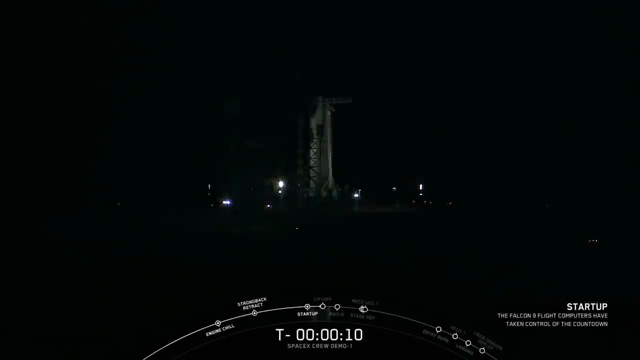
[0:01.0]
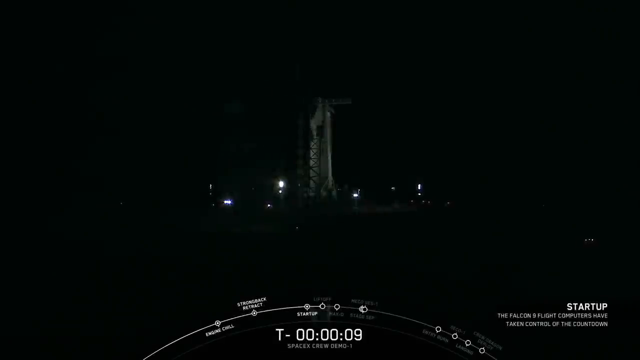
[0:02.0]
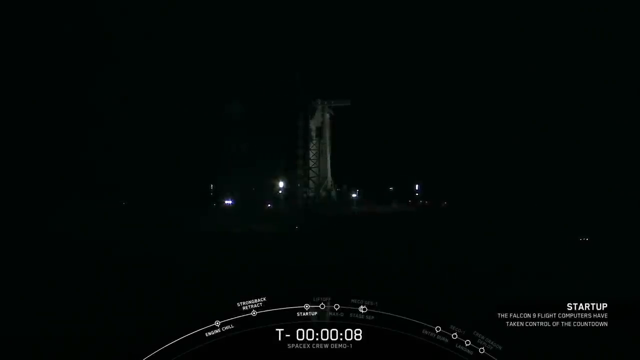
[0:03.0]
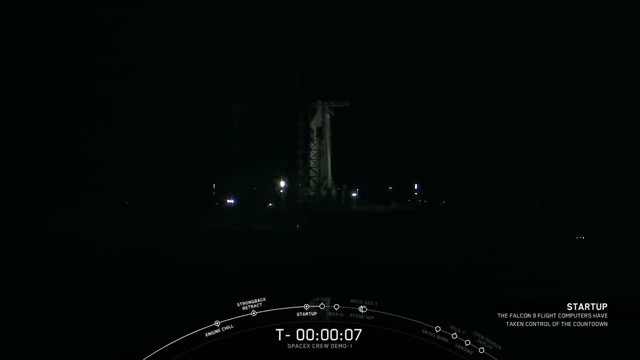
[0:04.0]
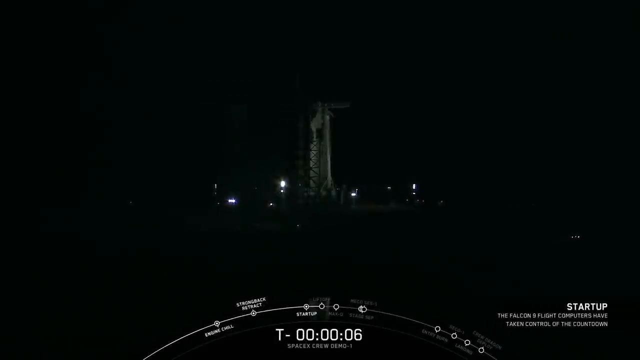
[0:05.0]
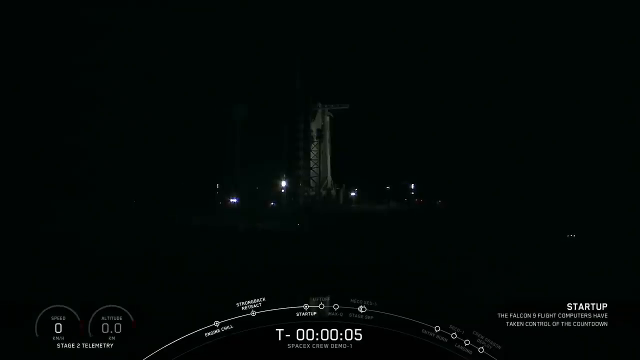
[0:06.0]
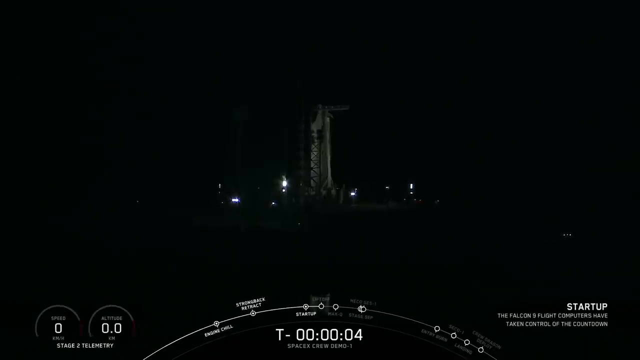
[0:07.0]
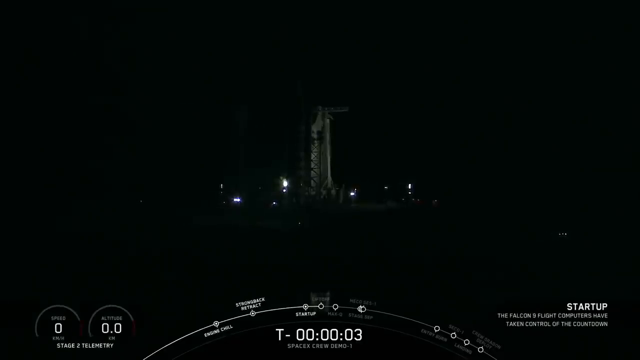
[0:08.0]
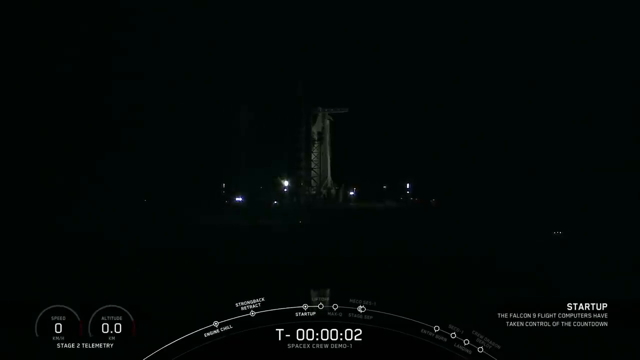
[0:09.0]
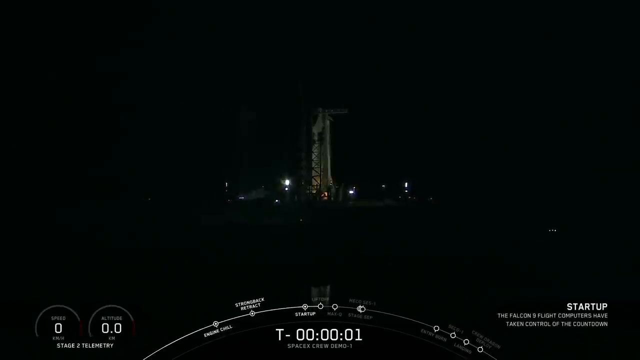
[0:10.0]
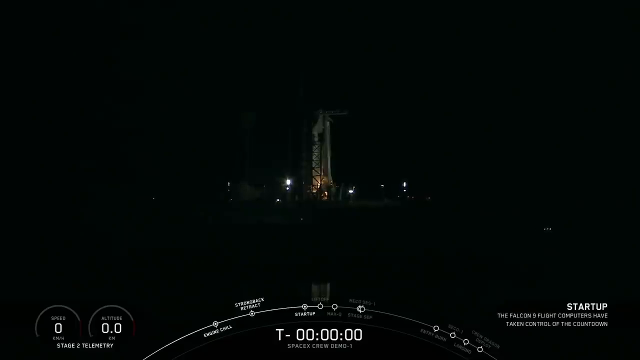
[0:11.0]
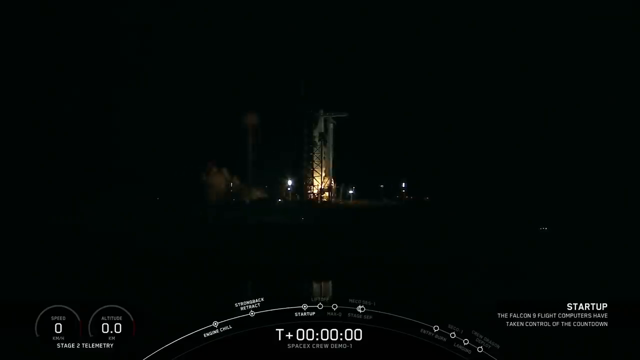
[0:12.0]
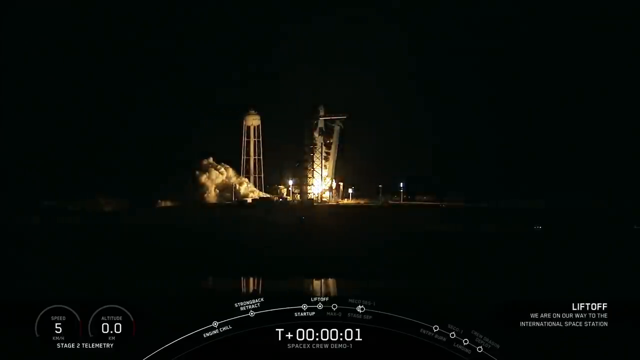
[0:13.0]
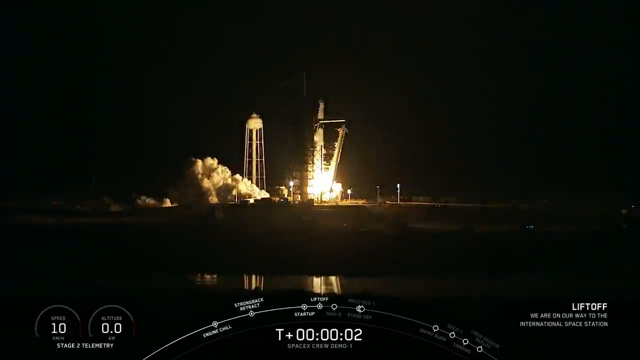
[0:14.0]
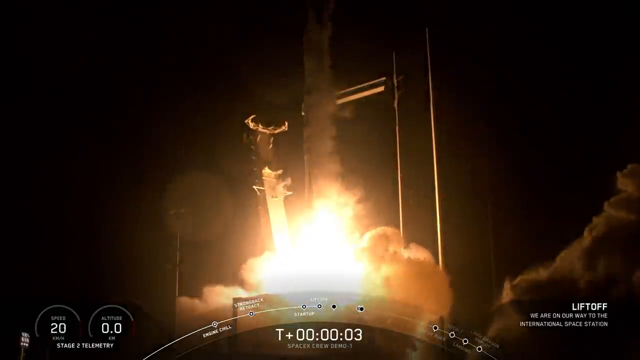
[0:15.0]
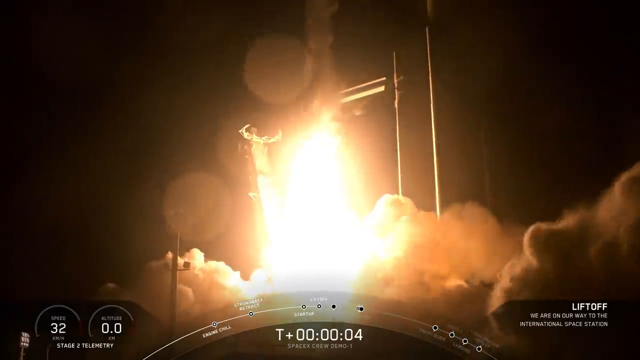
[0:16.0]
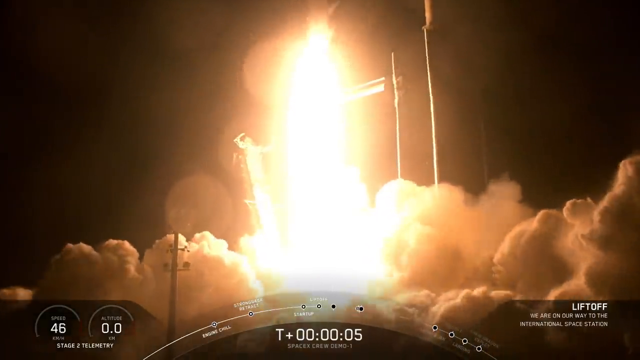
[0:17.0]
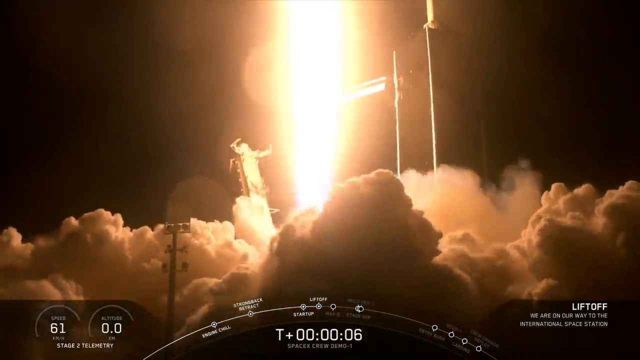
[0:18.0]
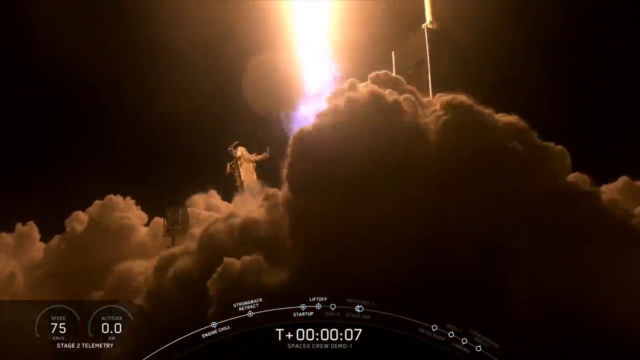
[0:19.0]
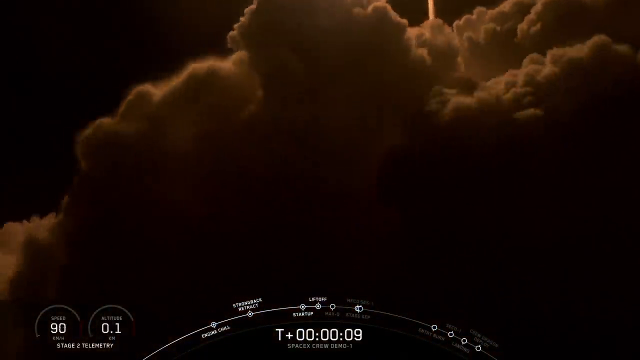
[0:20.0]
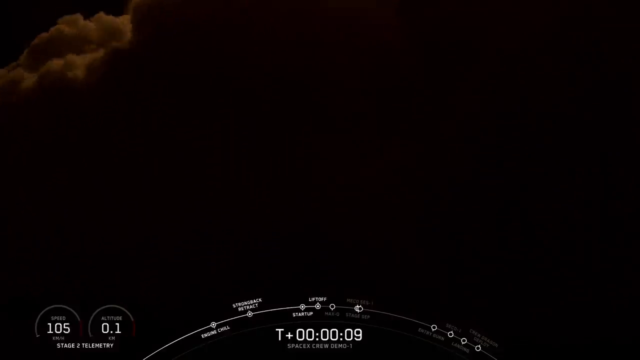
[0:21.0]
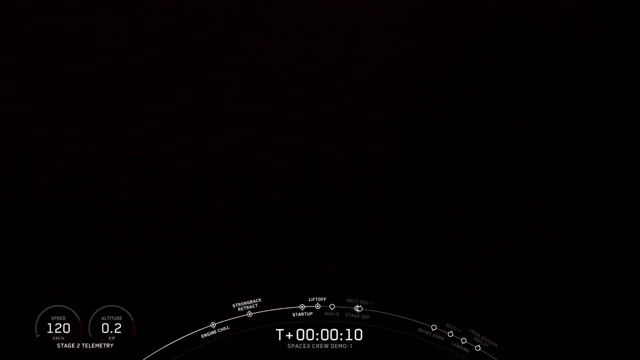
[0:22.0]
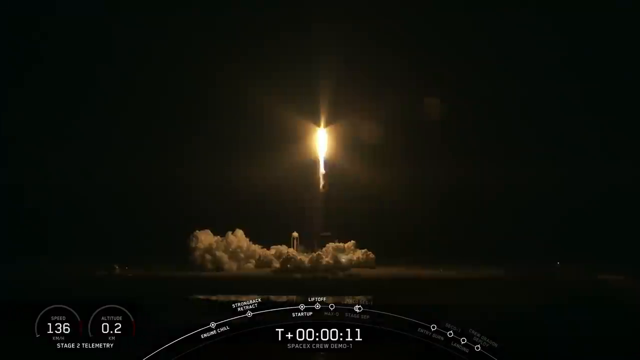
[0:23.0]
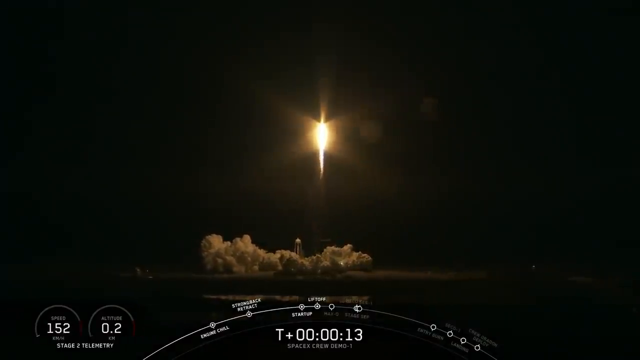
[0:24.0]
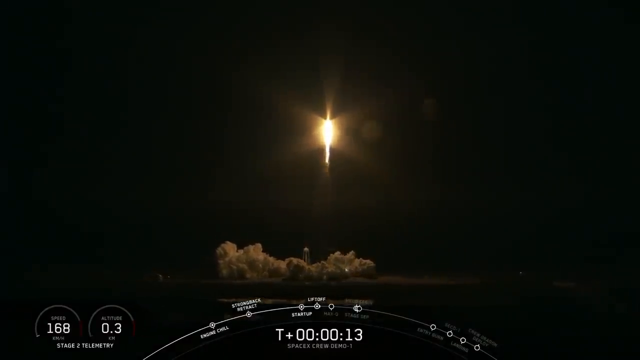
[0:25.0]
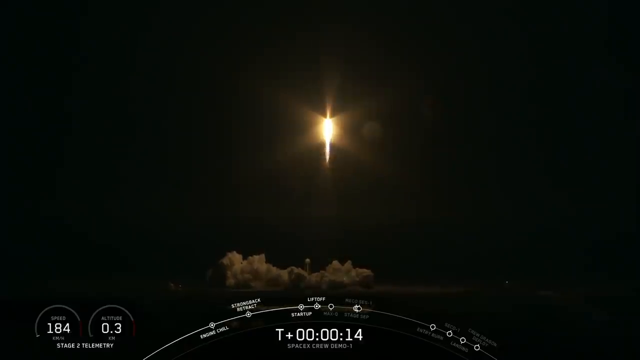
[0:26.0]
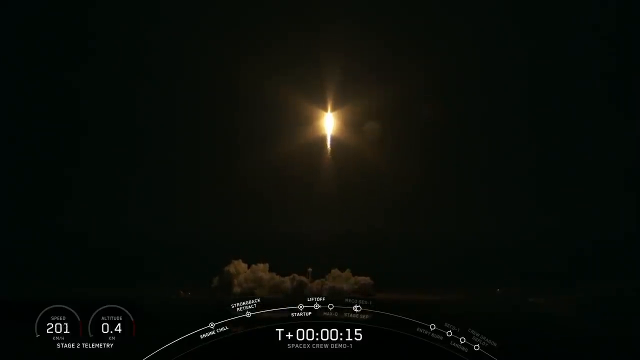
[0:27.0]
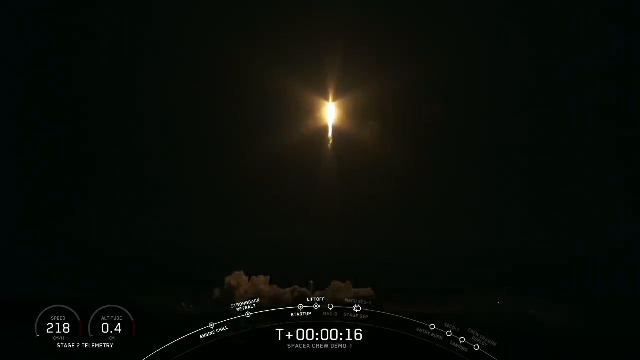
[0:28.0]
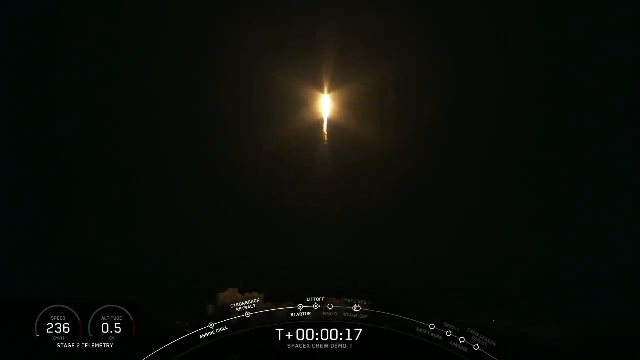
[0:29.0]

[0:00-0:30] The video opens on a black screen, then shows a white rocket standing straight up on a launch pad, seen from a great distance. The scene is not very well illuminated; a few lighting fixtures surrounding the launch pad barely light the rocket. Superimposed graphics appear at the bottom of the screen: an arc rising from the bottom edge, the top of a circle with several plotted items on it indicating steps involved in a rocket launch. On the bottom right is a caption reading "Startup," and beneath it, in all caps, a description reads "The Falcon 9 flight computers have taken control of the countdown." Speedometer-type graphics then appear in the bottom left: one for speed, reading 0, and one for altitude, reading 0.0, with an all-caps title beneath them that says "Stage 2 Telemetry." Fire begins to emit from the bottom of the rocket, and the launch assembly falls off to the right as the rocket begins to take flight. The view switches to a close-up of the base of the rocket billowing with fire and smoke as it ascends directly into the air. Smoke overcomes the camera lens and the screen goes blank, before a wider shot shows the rocket fully launched from the pad and ascending vertically into the sky.